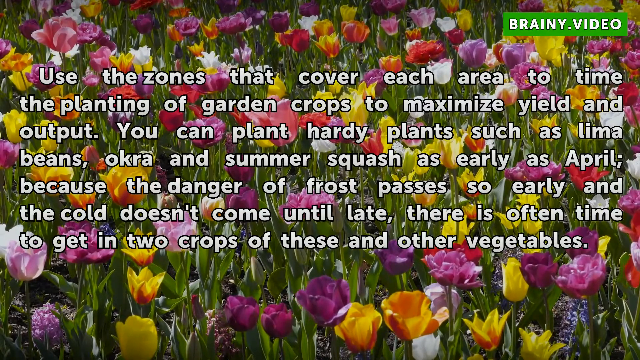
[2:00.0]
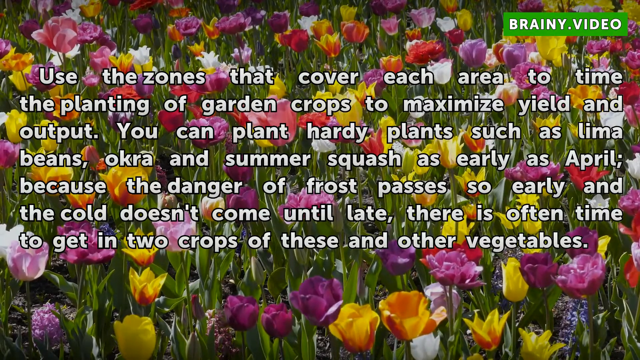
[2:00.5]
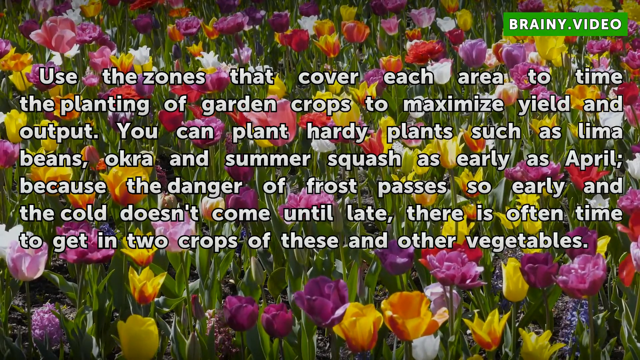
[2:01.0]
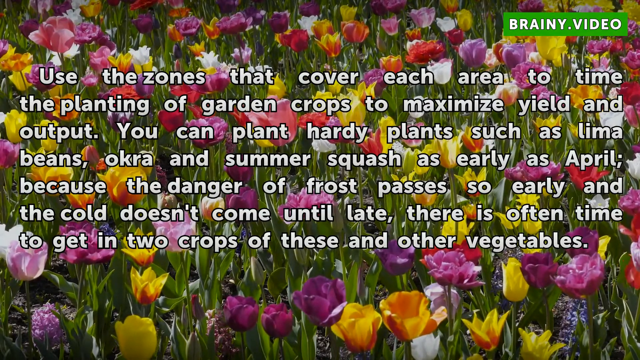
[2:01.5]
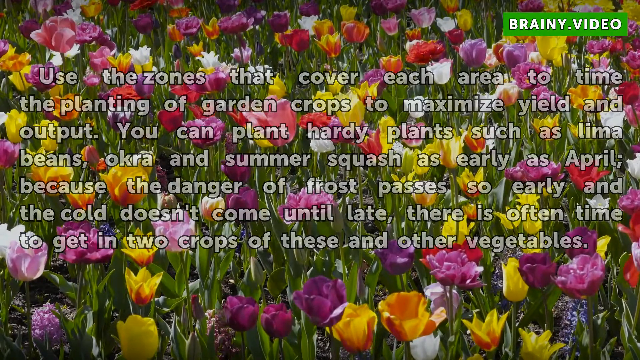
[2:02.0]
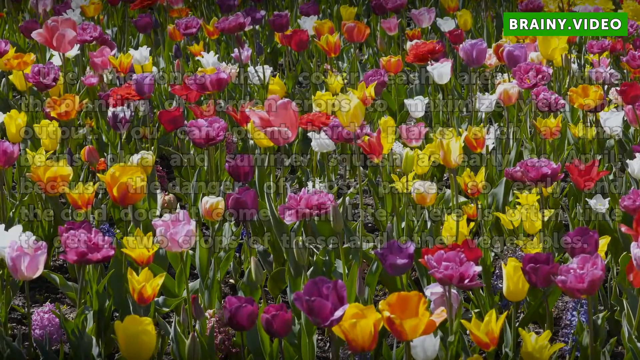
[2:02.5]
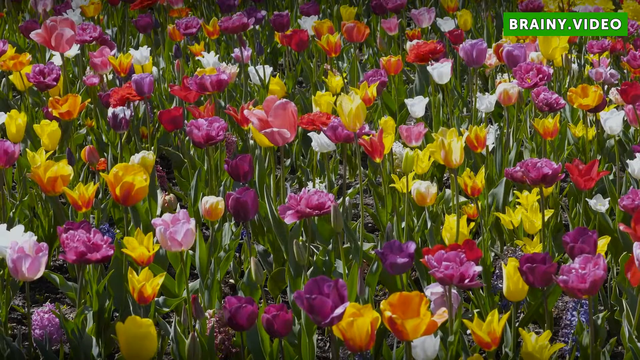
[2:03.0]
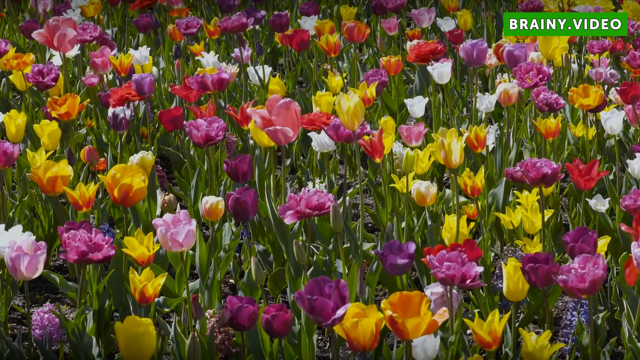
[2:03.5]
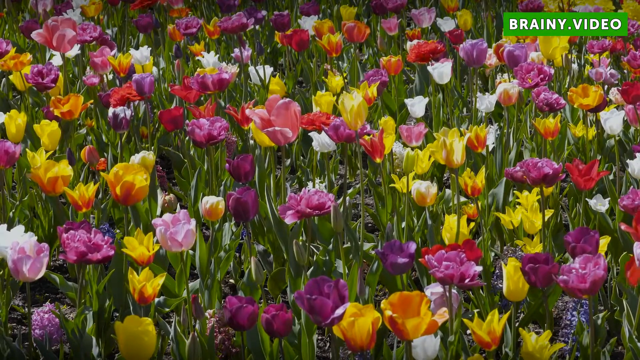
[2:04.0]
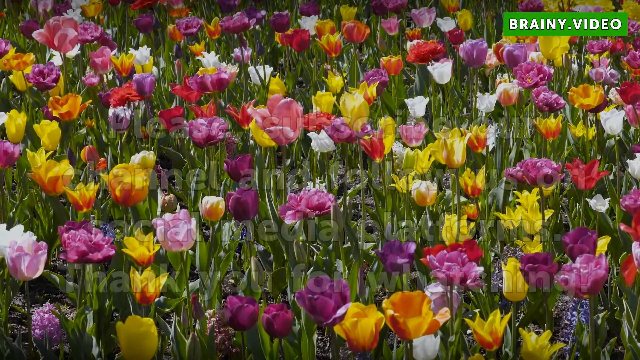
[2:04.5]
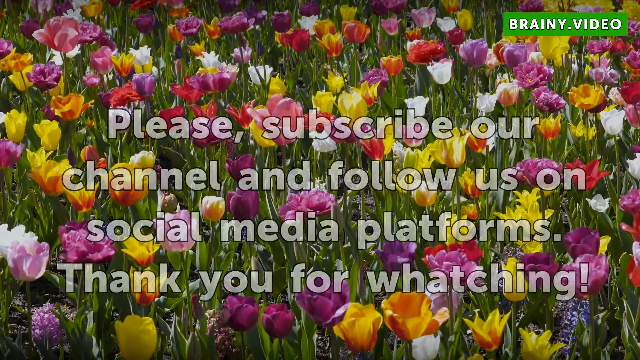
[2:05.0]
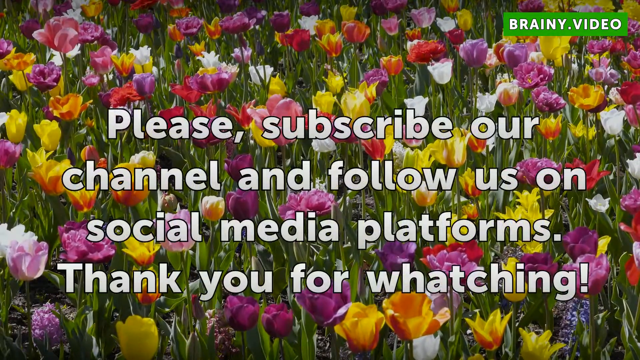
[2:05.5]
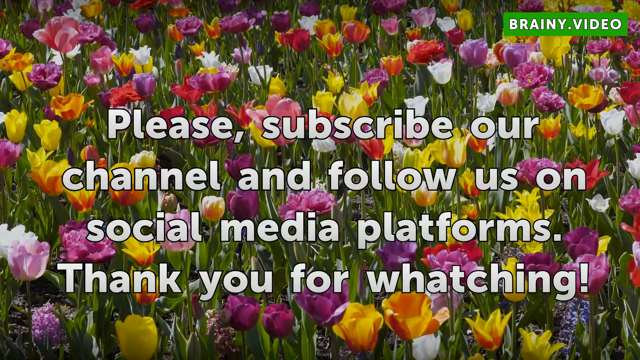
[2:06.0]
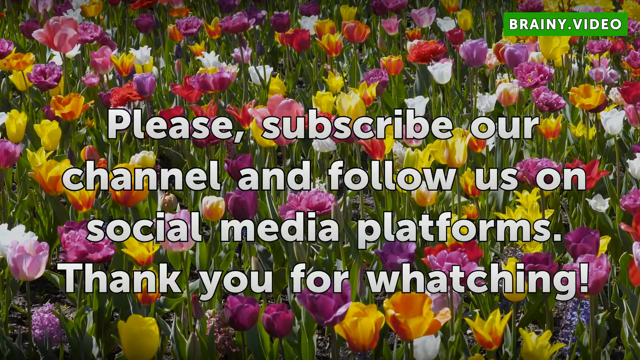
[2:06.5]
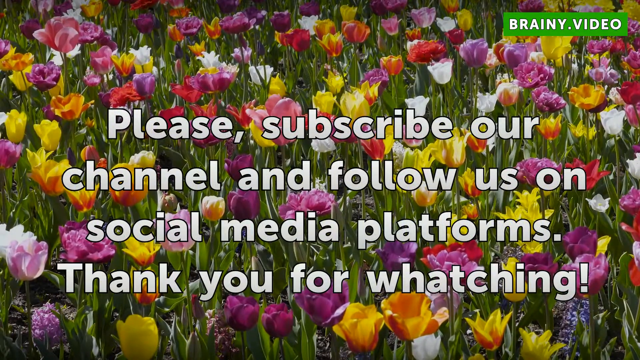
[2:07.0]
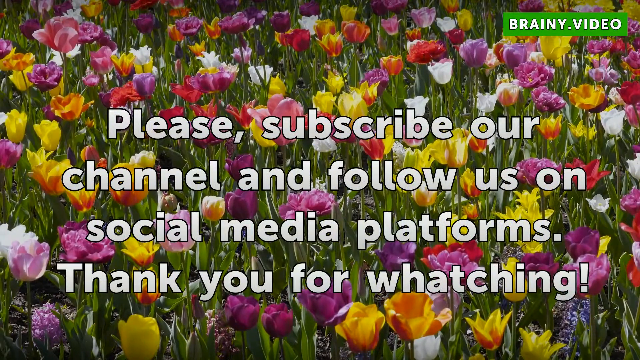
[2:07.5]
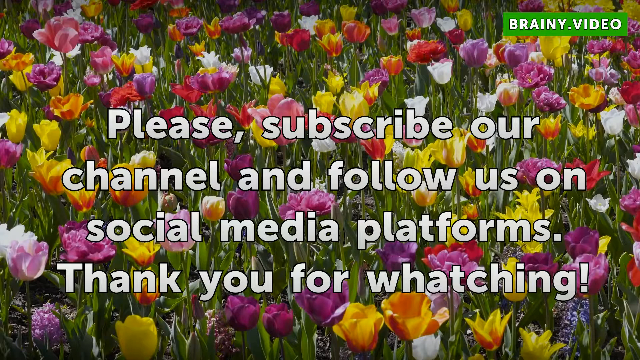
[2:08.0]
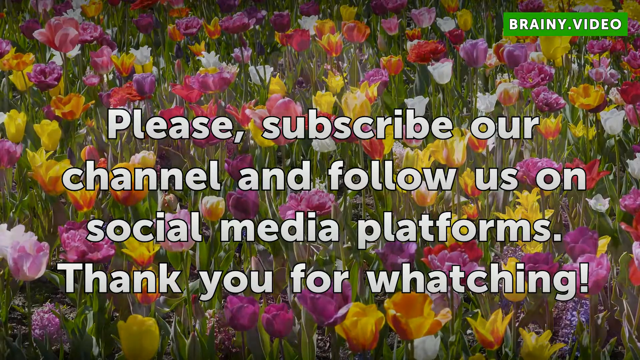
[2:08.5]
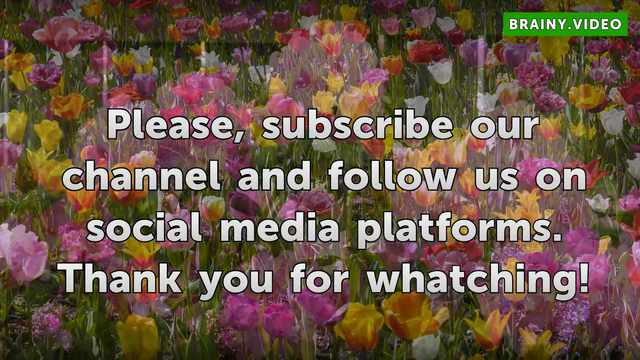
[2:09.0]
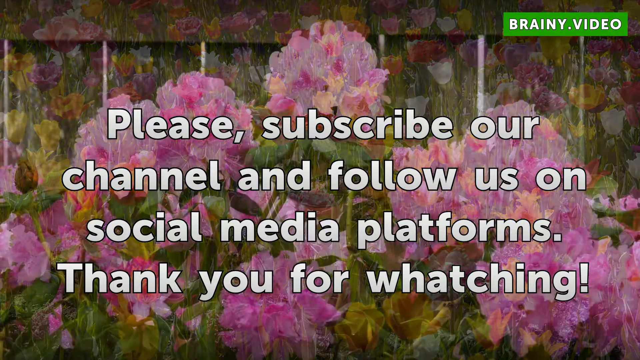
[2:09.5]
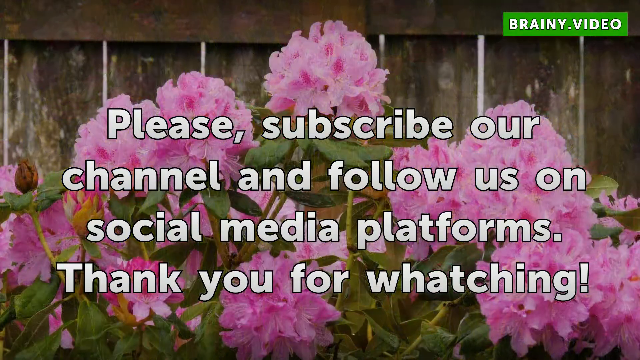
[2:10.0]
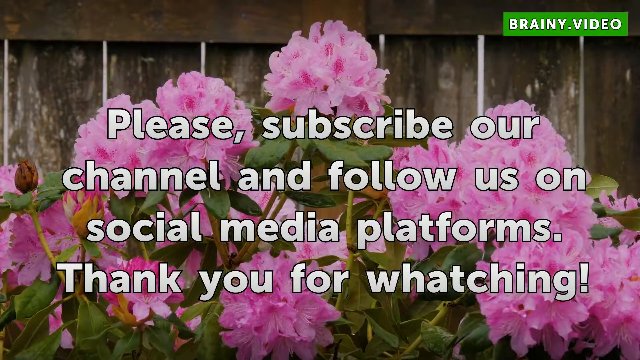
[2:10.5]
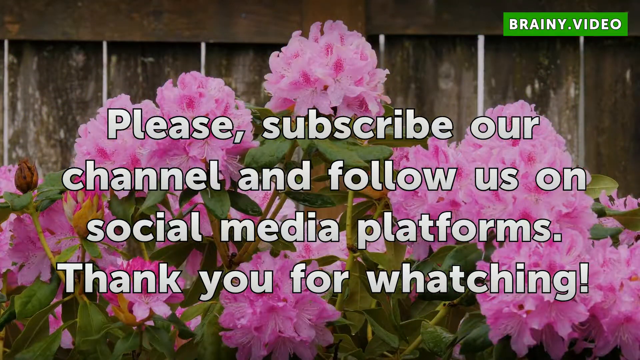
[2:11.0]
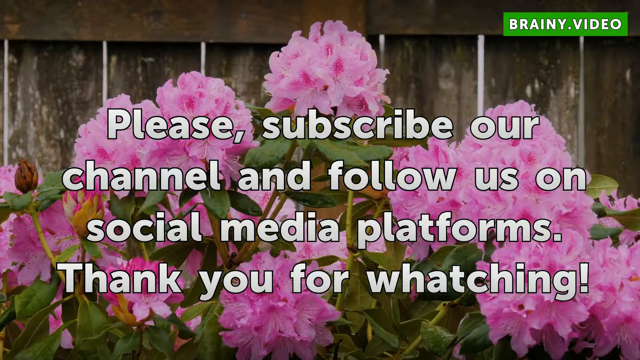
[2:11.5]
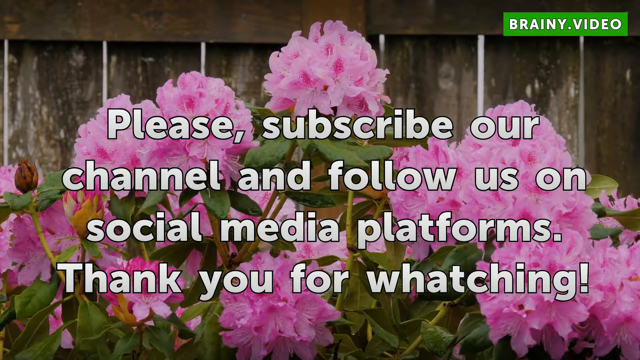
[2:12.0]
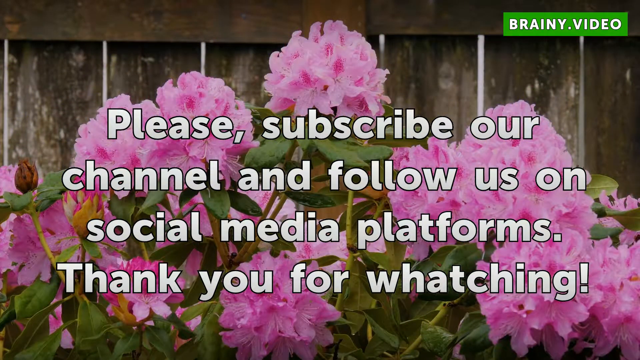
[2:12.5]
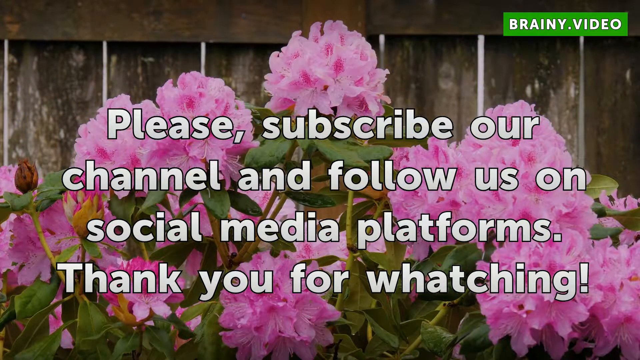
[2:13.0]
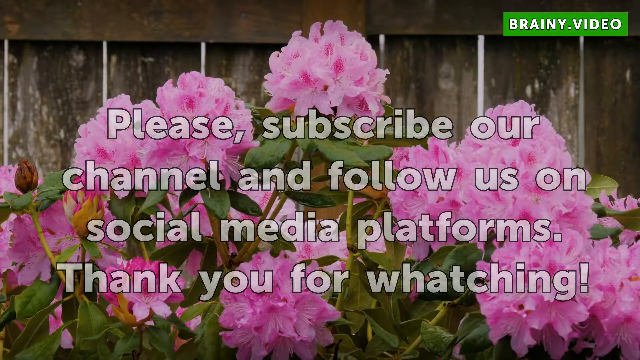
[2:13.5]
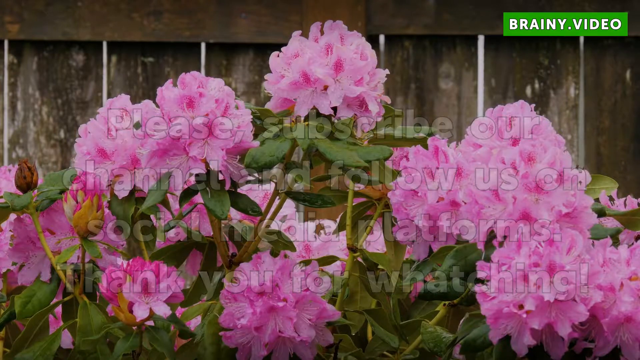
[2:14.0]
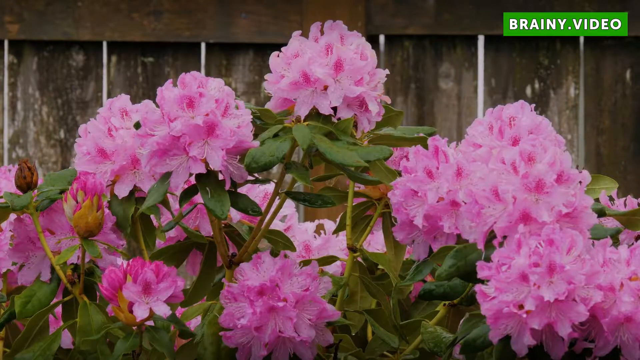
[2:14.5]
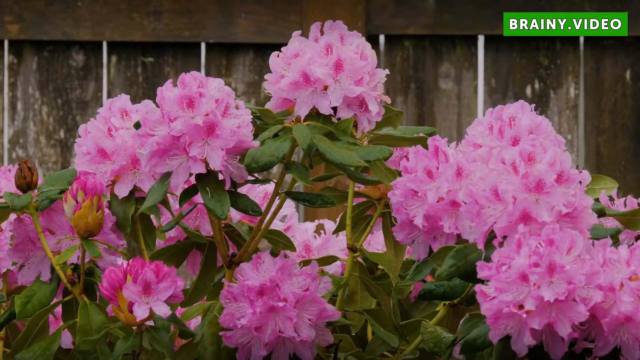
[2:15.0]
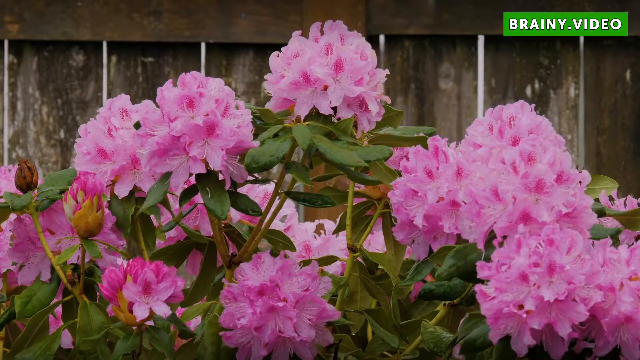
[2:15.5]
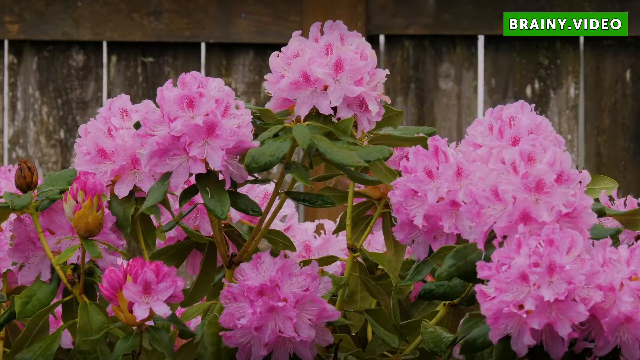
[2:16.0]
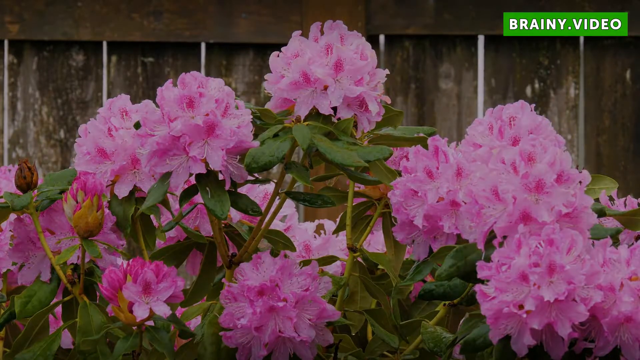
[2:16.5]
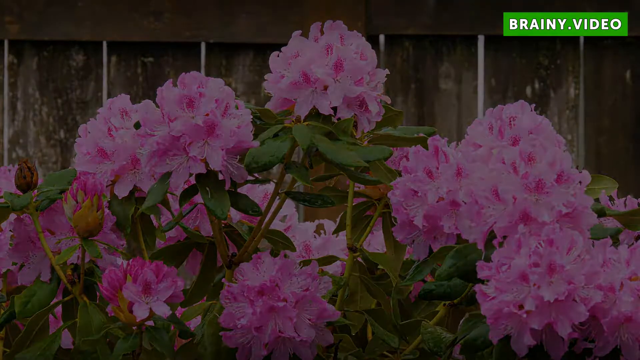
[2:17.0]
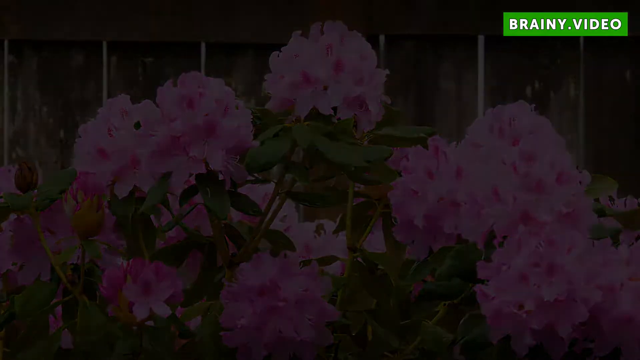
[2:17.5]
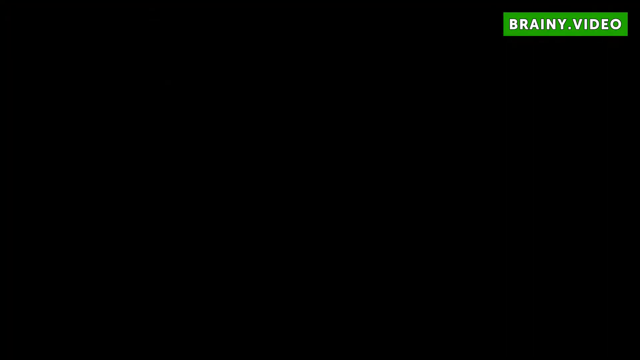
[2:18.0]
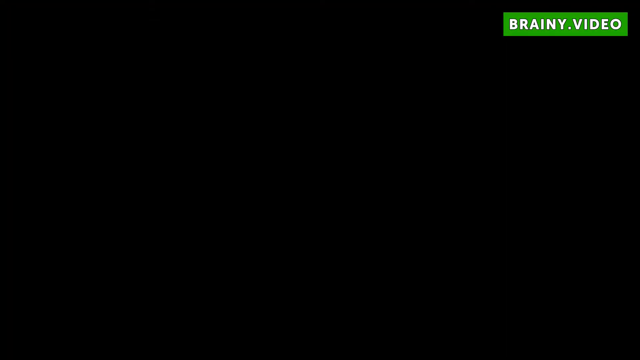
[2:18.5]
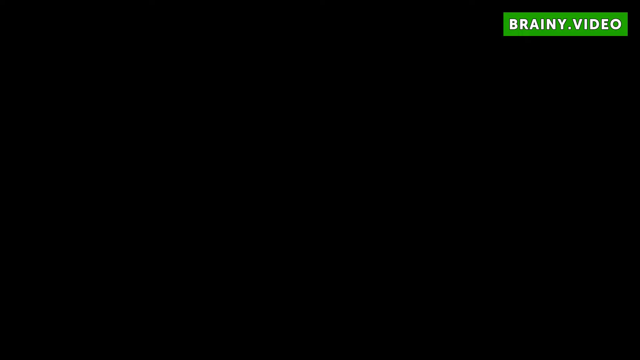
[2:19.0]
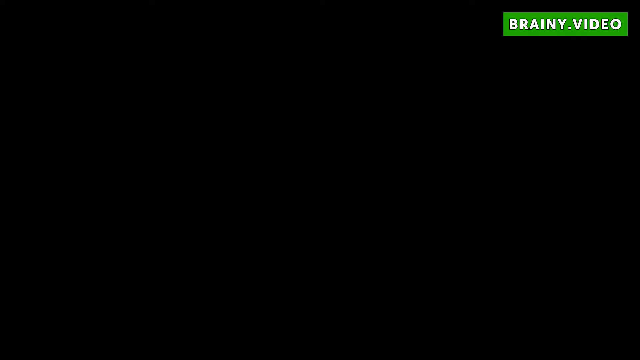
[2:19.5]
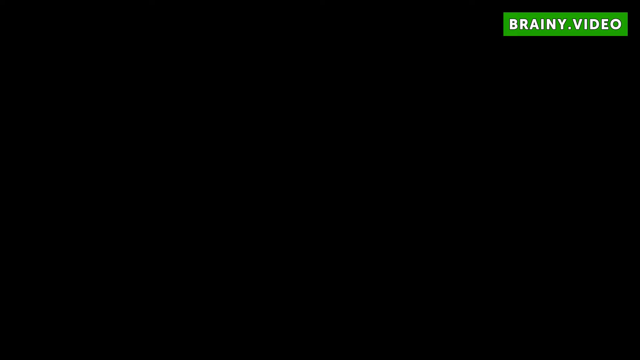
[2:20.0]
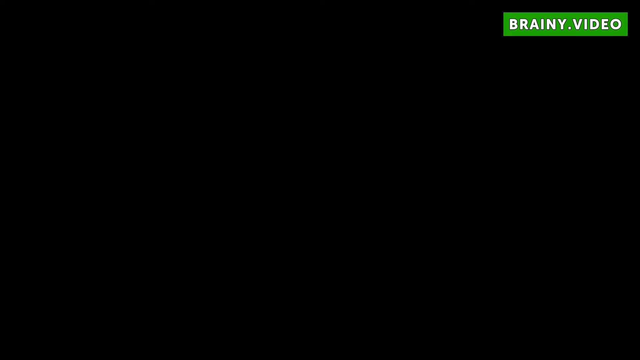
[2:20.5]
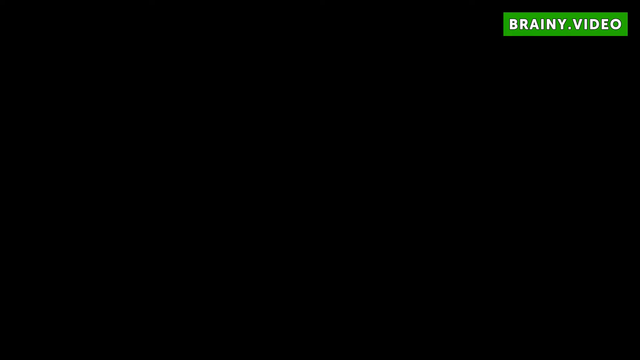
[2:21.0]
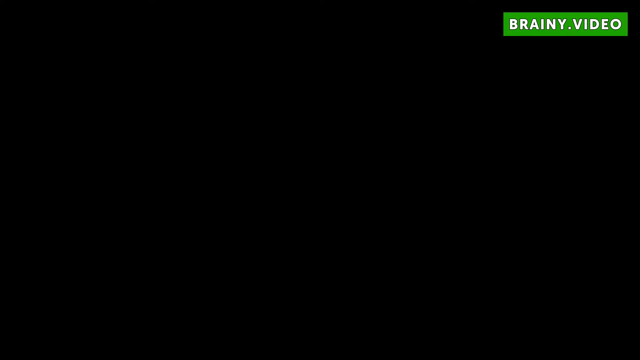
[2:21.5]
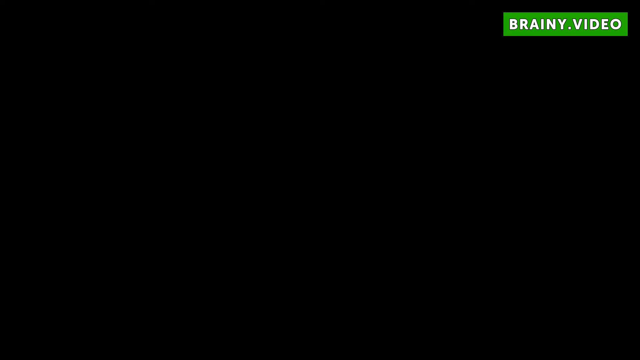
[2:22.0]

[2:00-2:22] The text fades away, leaving the close-up footage of a field of poppies in many different colours. More white text then appears over the footage reading "please subscribe our channel and follow us on social media platforms, thank you for watching", with the word "watching" misspelled with an H after the W. The text remains on the screen while the image changes to footage of clusters of bright pink flowers in front of a wooden fence, perhaps a dozen round clusters on green stems with green leaves. The footage then fades to black at the end of the video. Throughout most of the video, a horizontal green rectangle in the upper right corner reads "Brainy Video" in white block text, which seems to be the name of the channel presenting the video.